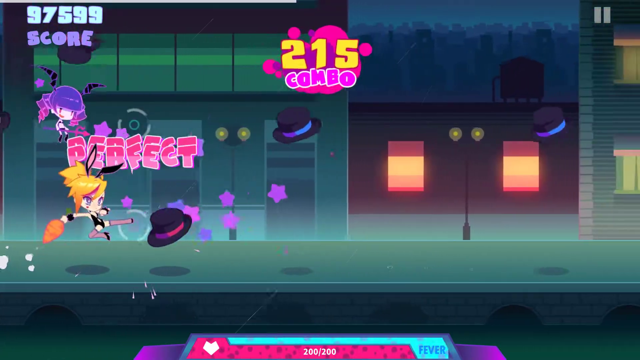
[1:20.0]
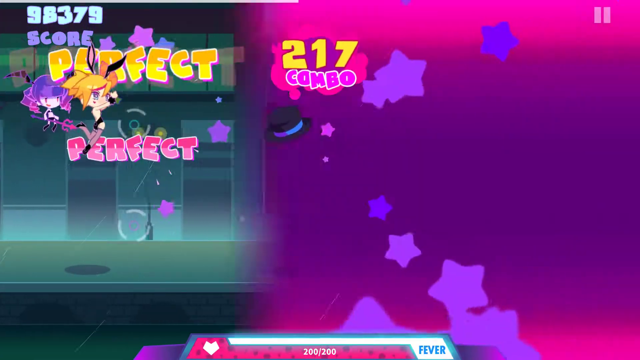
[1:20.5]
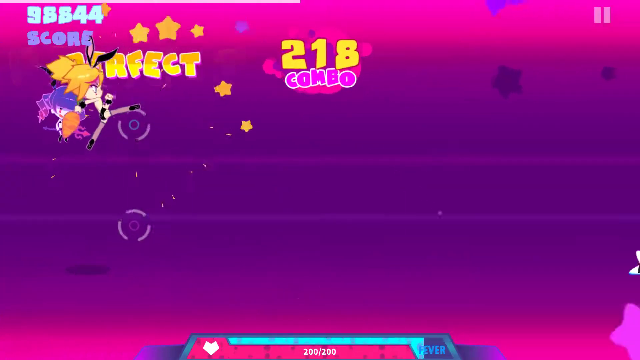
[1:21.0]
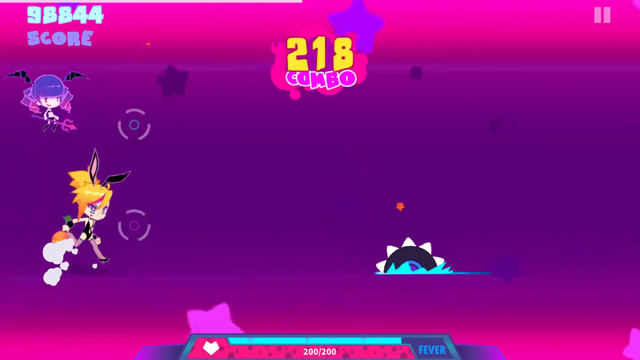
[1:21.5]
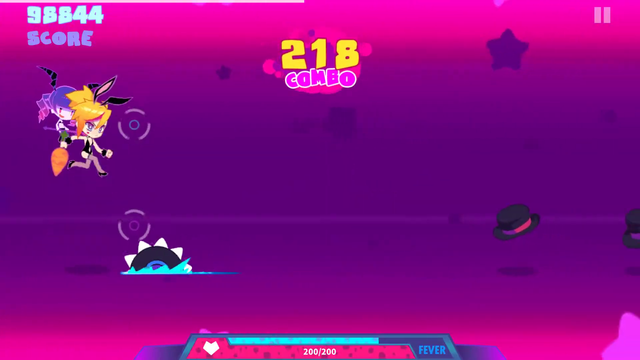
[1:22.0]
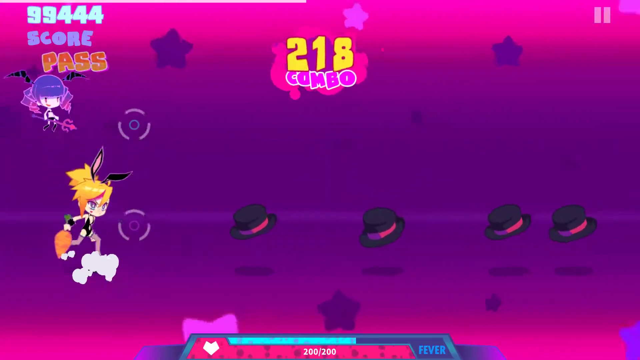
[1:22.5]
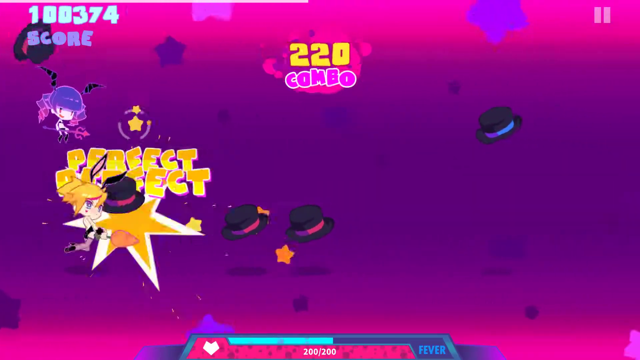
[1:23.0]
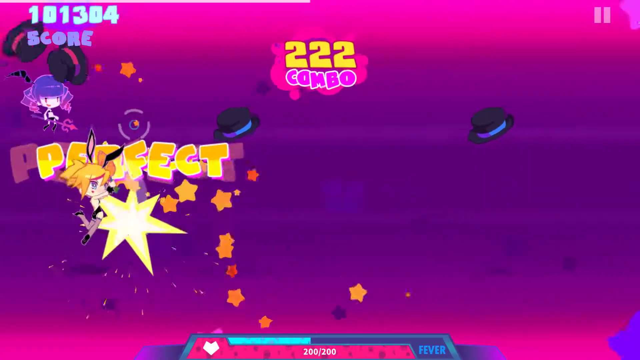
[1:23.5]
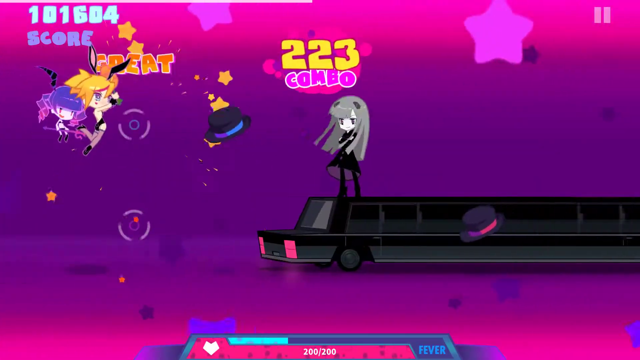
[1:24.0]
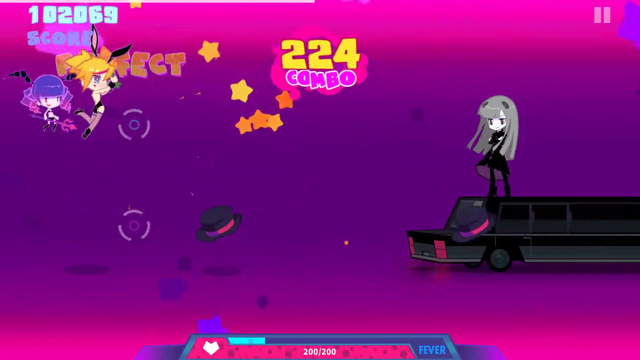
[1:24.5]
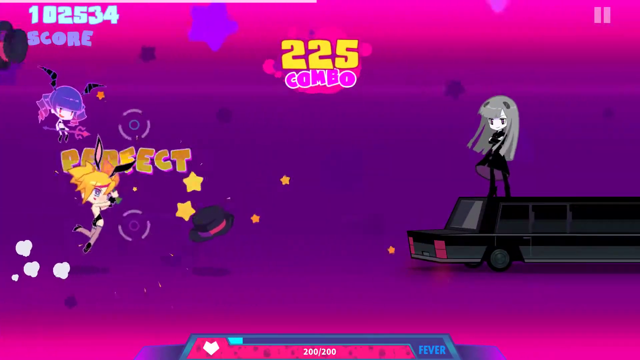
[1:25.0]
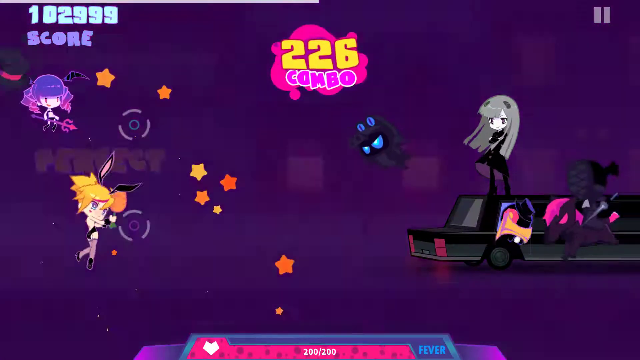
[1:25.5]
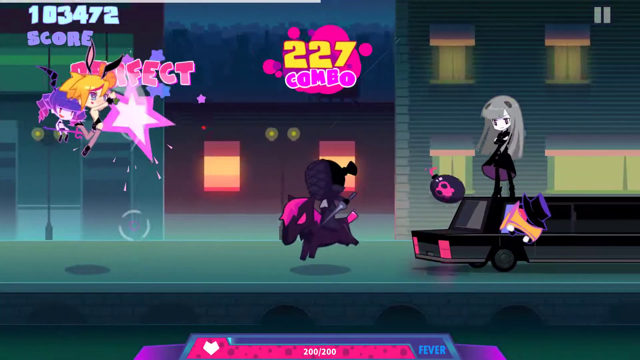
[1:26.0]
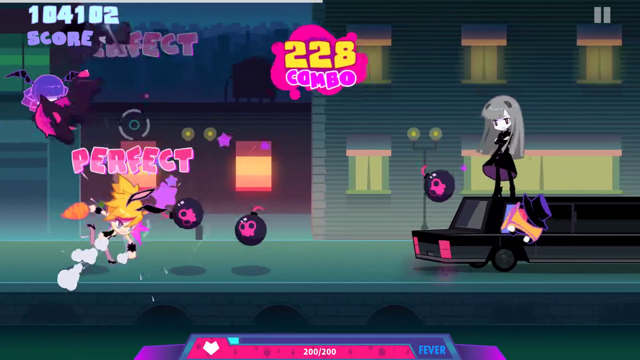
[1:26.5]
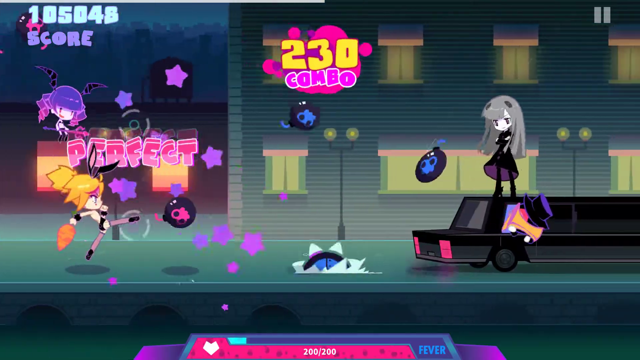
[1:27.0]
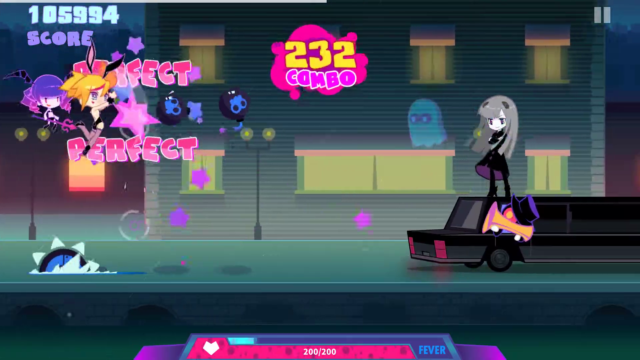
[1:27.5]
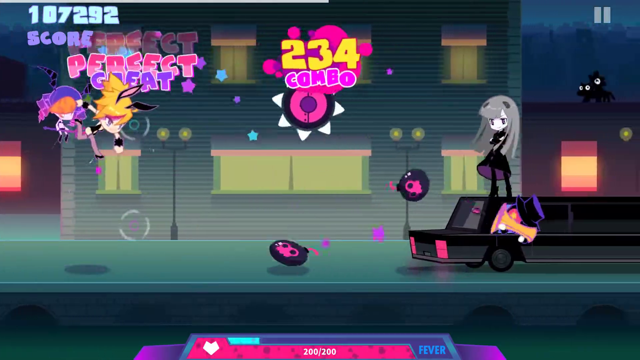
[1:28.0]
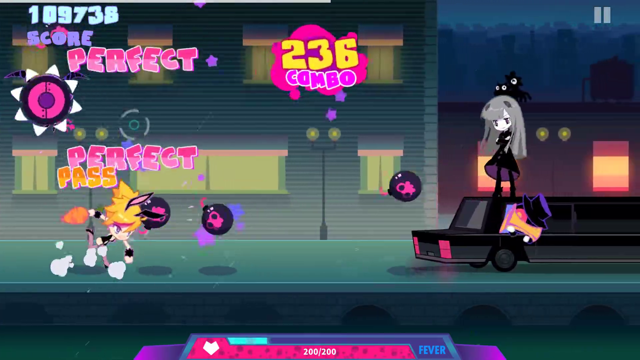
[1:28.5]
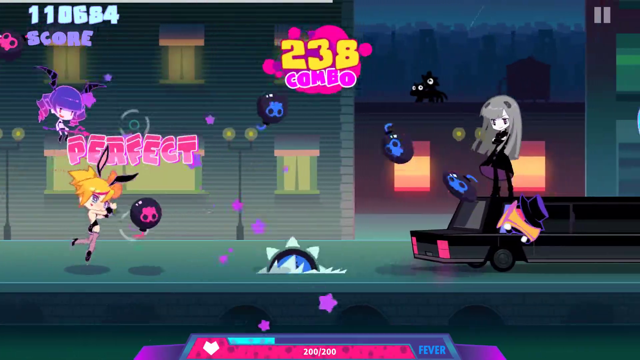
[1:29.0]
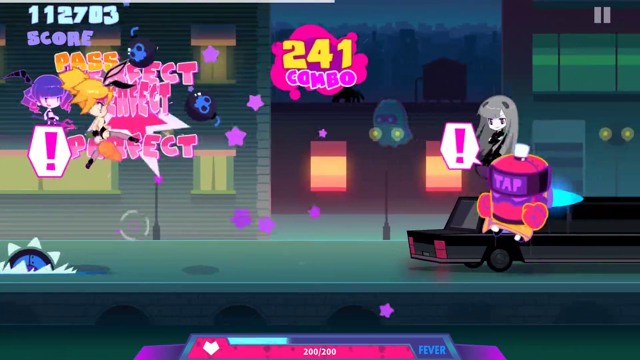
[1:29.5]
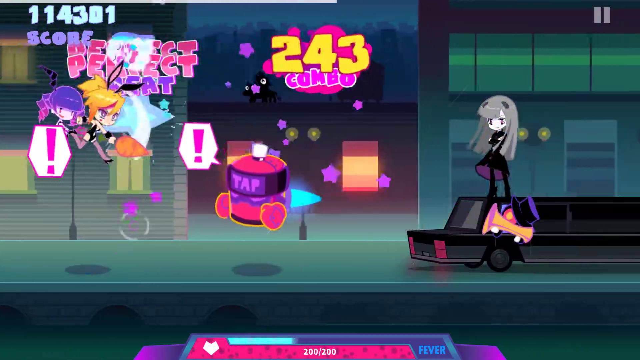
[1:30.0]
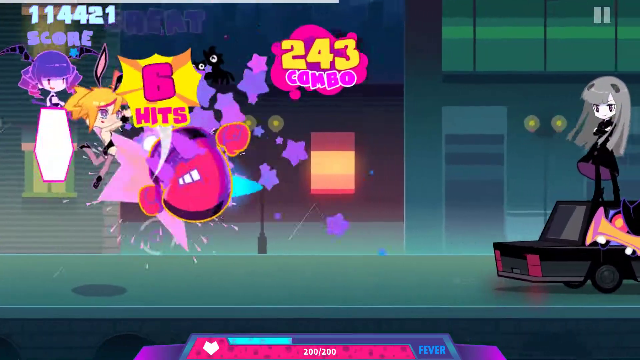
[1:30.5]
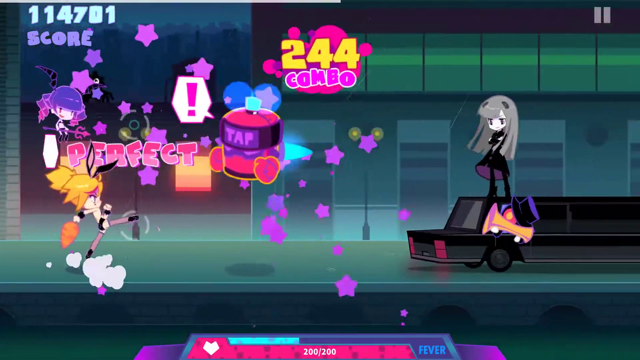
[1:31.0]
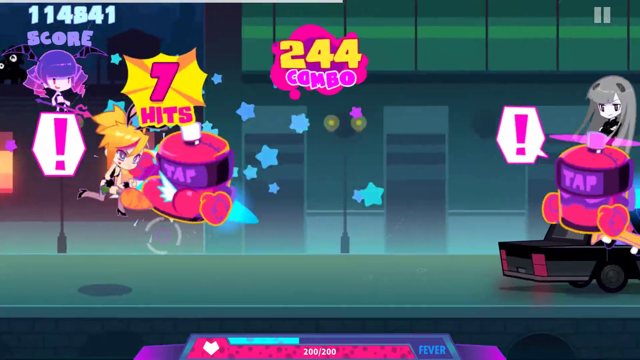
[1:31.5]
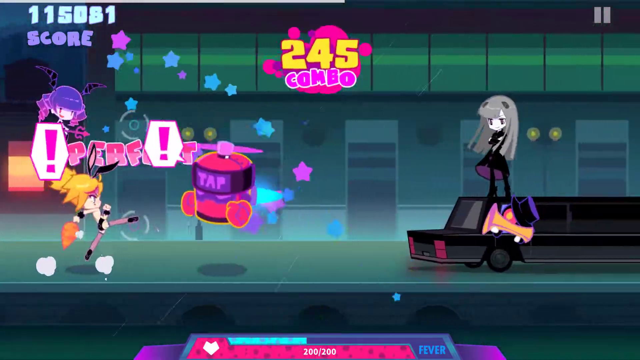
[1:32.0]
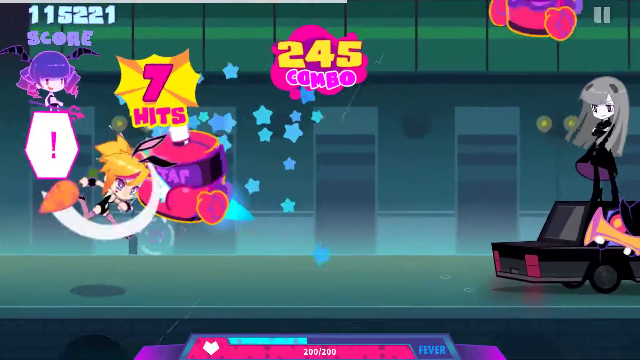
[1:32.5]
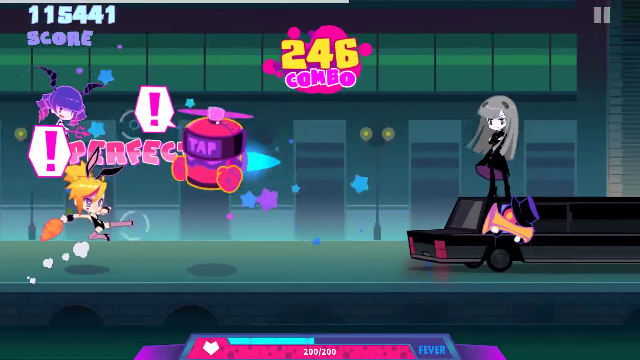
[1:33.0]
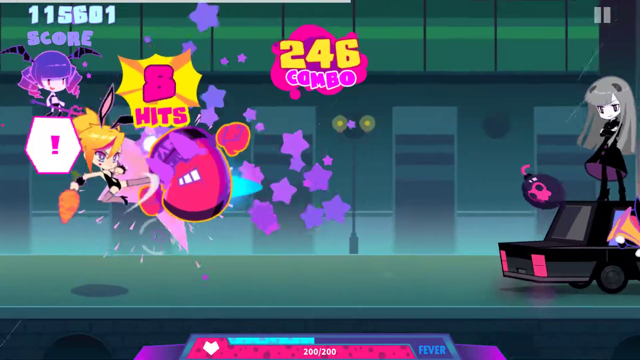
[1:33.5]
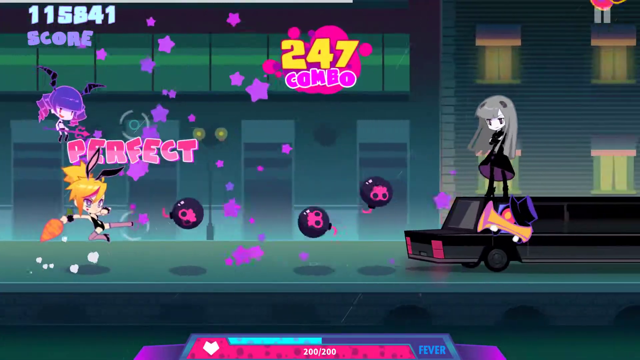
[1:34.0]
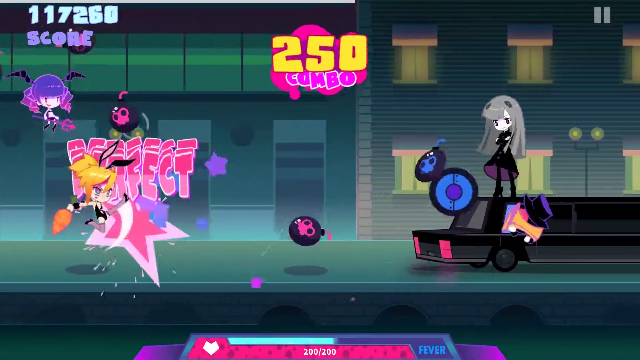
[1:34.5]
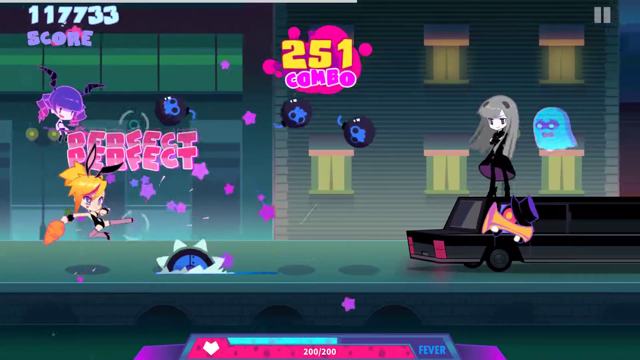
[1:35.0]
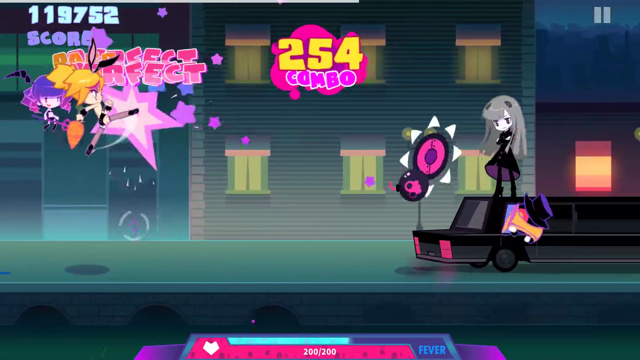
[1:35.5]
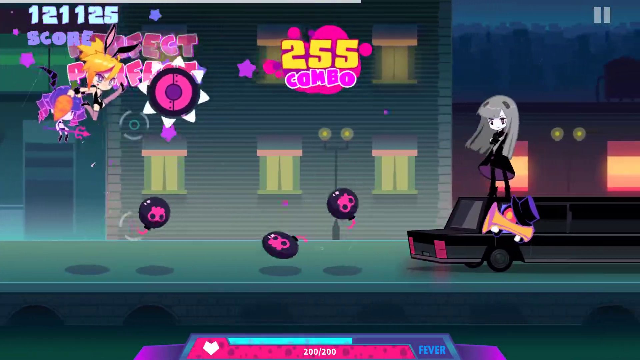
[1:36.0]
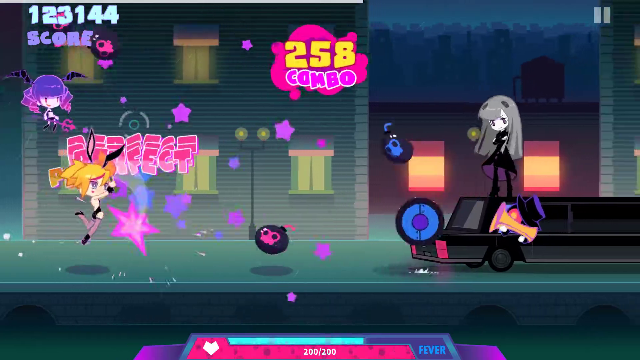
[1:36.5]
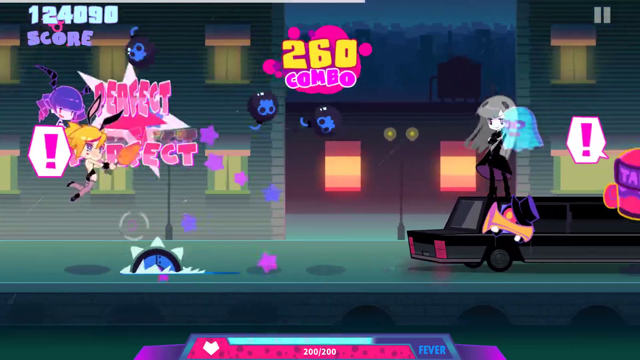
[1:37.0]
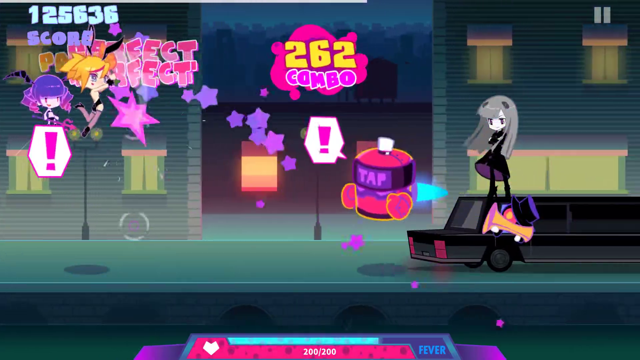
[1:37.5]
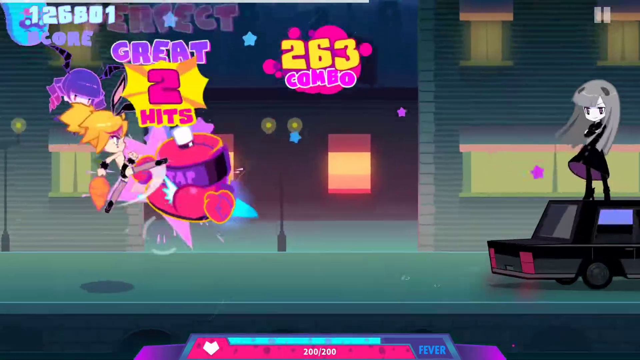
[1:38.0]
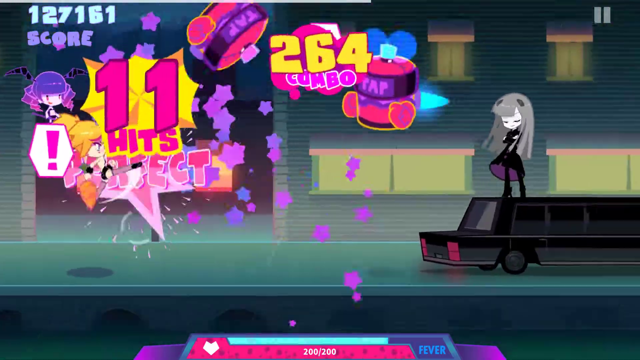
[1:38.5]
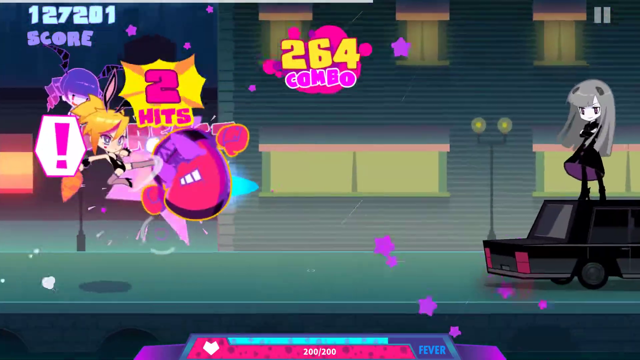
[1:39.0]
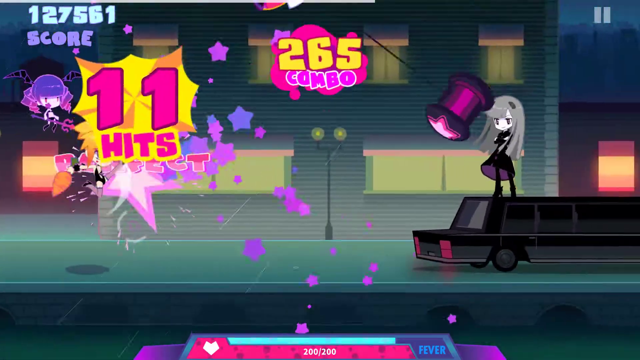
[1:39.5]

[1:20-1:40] In a video game, a woman anime character with black bunny ears wears a tight, sleeveless, legless black corset that looks like a tight black swimsuit, plus long stockings and high heels. She runs down a sidewalk, and a small anime character with a purple hat floats above her. The scene is a city with a street and the sidewalk she is on. To her left are different buildings, including a dark building with two orange windows and a green building with five or six doors and windows above them. As she runs, objects fly at her and she tries to catch them all. A limousine then drives past her, and blue and pink balls come out of it. Every time she catches something, the word "perfect" appears above her. An anime character with long gray hair and a black dress is standing on the back of the limousine.